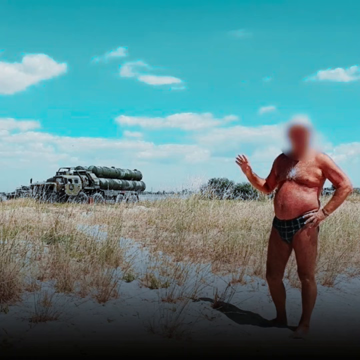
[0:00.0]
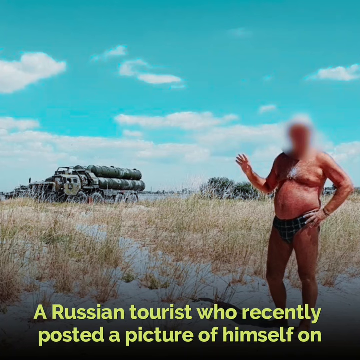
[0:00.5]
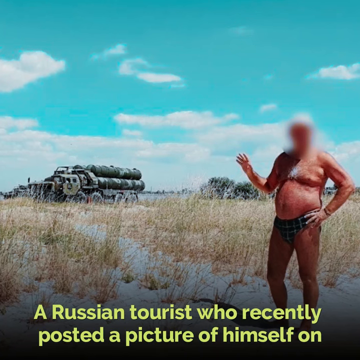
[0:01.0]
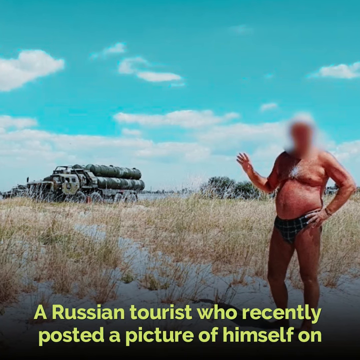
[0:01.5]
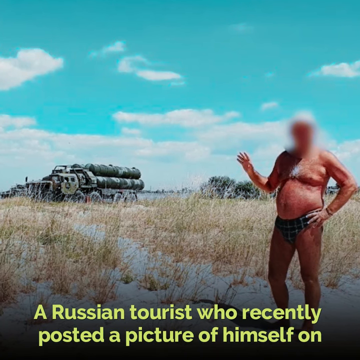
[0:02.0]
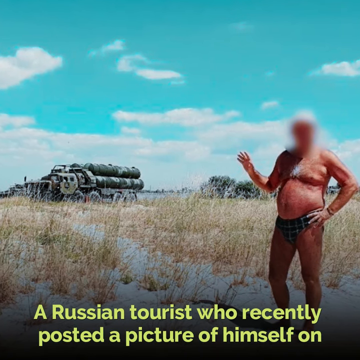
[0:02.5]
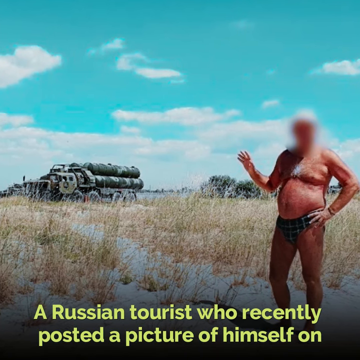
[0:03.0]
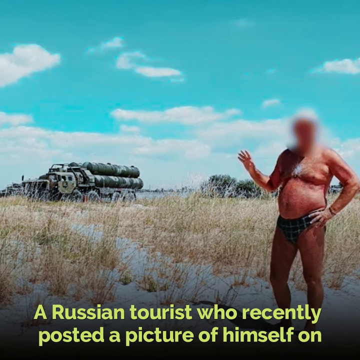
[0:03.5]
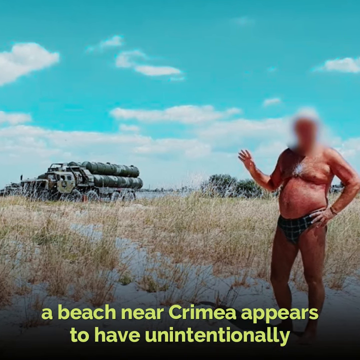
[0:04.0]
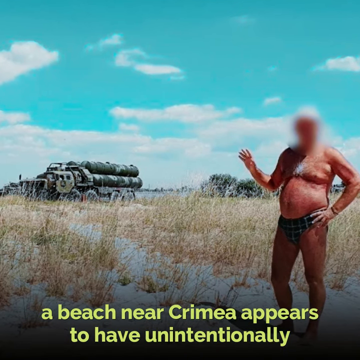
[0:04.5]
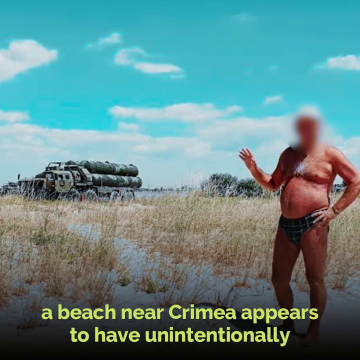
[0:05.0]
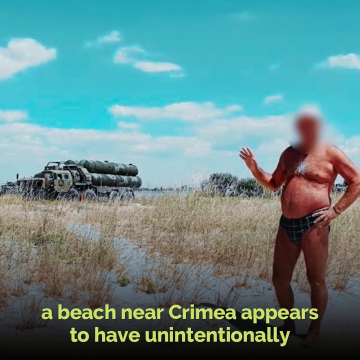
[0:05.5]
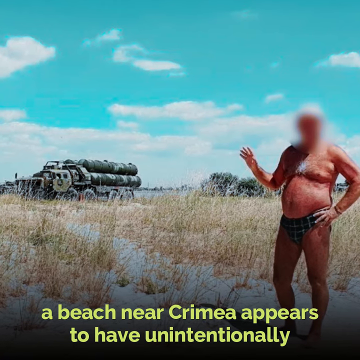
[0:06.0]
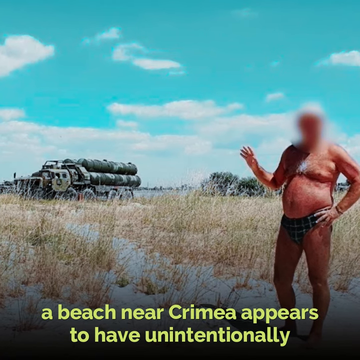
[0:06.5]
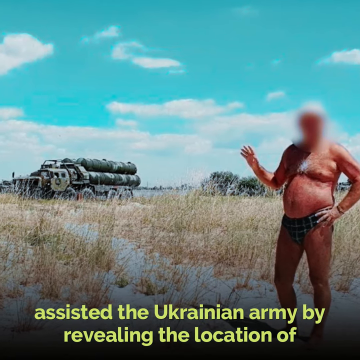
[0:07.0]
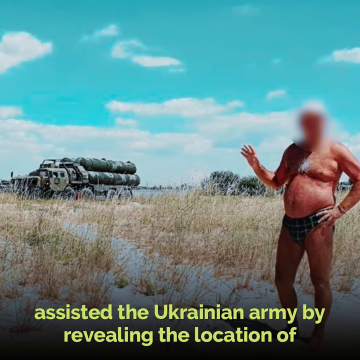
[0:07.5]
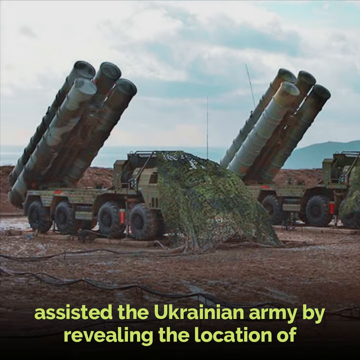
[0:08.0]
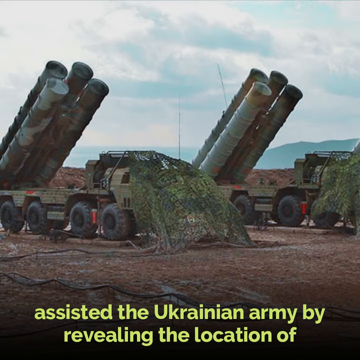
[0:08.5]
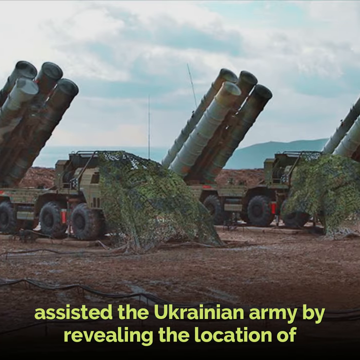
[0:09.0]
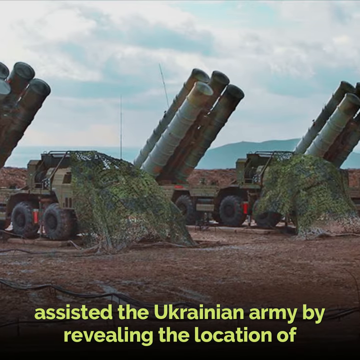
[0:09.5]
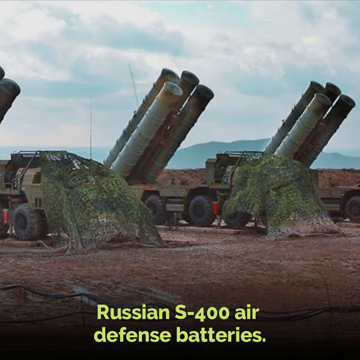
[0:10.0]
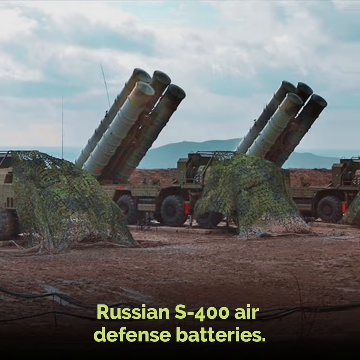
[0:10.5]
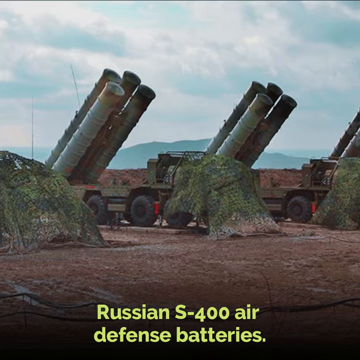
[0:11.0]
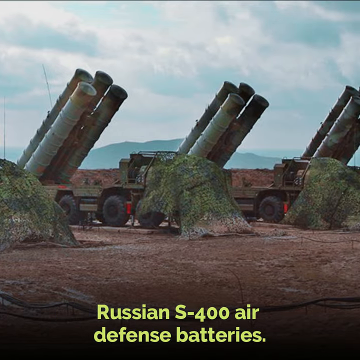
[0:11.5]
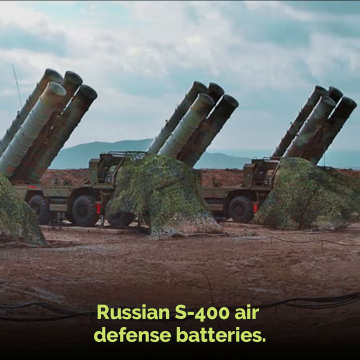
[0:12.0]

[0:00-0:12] A slideshow presents a couple of different images. The first shows an older, somewhat heavyset man standing in a field on the right side of the image, sort of posed and kind of waving, with one hand on his hip. He wears a Speedo and is very tan, apparently from working on his tan while on vacation. He is standing in what is sort of an open field, with some military vehicles behind him. His face is completely blurred to censor his identity. The scene is very bright and sunny. The next photo is a close-up of these vehicles, or possibly this type of vehicle. They look camouflaged and are carrying some large cargo. Accompanying text says that "a Russian tourist who recently posted a picture of himself on a beach near Crimea appears to have unintentionally assisted the Ukraine army by revealing the location of Russian S-400 air defense batteries."